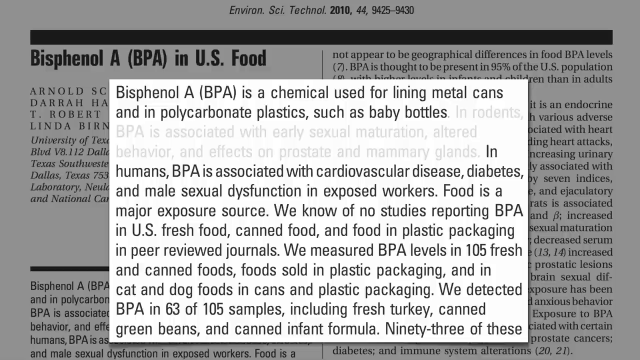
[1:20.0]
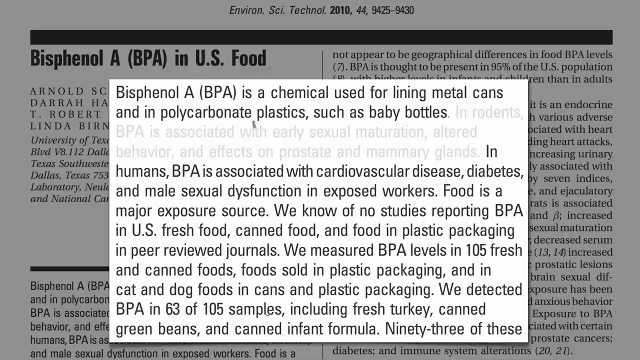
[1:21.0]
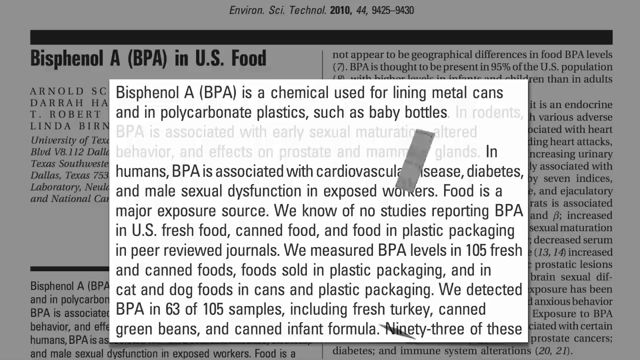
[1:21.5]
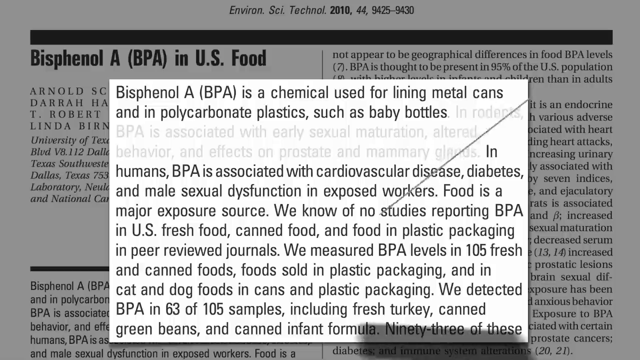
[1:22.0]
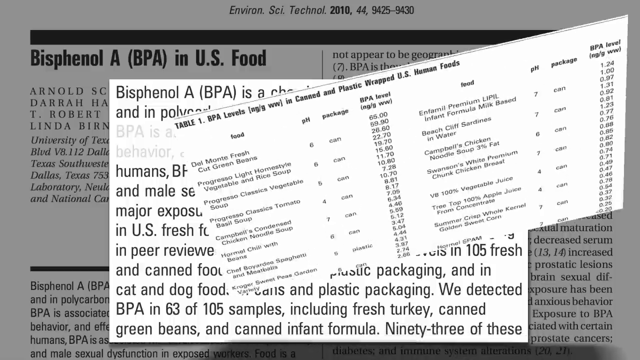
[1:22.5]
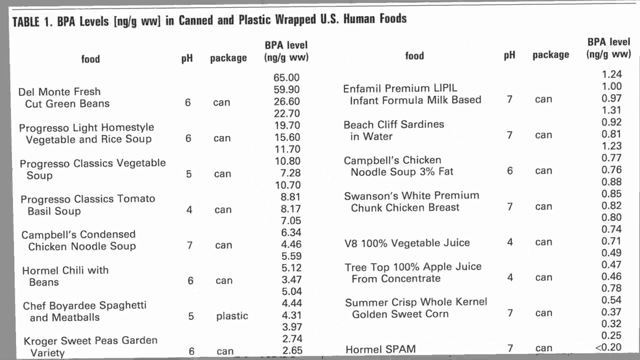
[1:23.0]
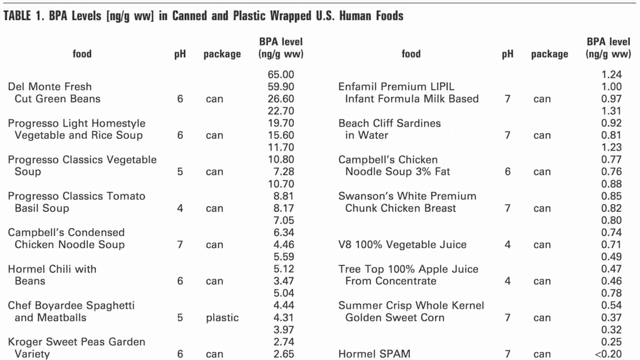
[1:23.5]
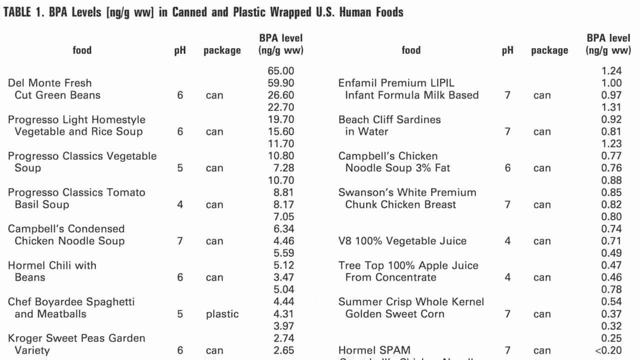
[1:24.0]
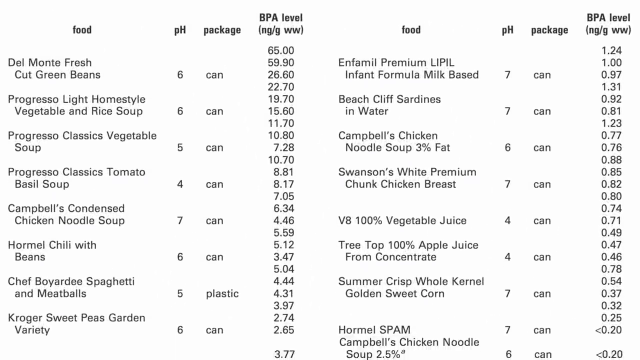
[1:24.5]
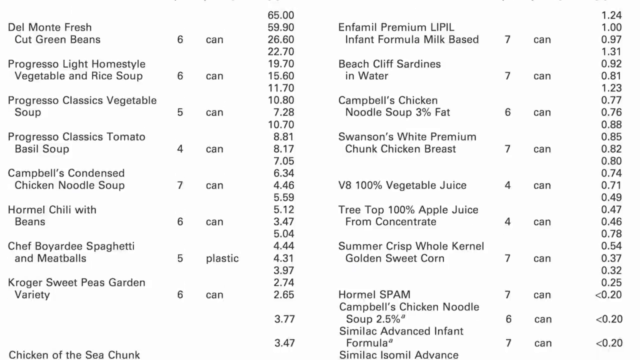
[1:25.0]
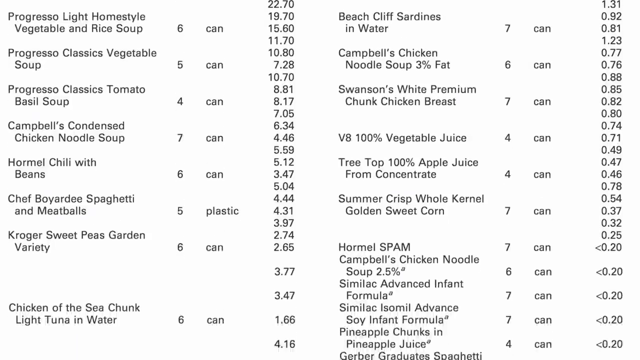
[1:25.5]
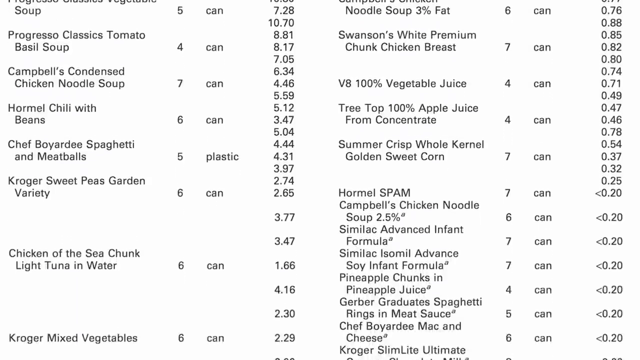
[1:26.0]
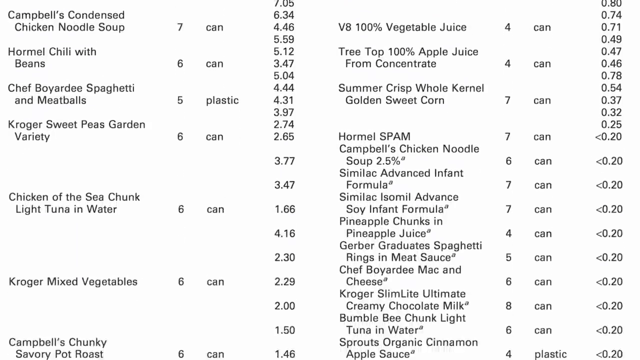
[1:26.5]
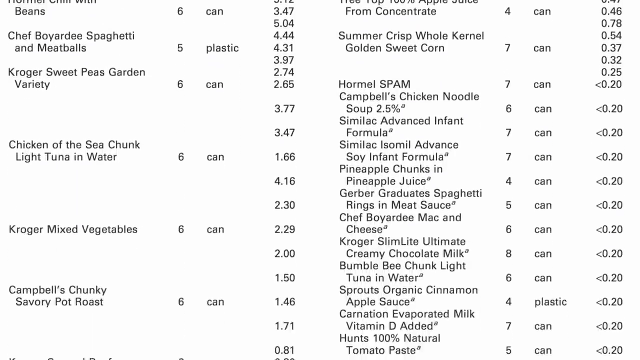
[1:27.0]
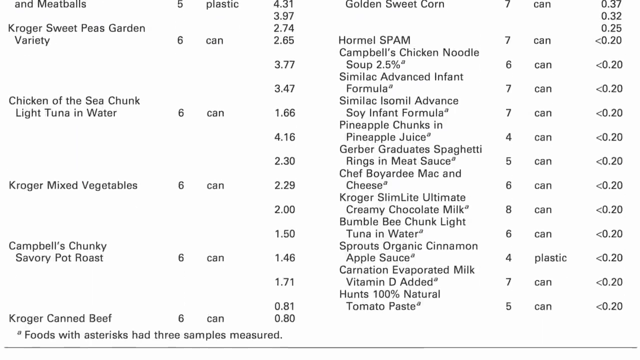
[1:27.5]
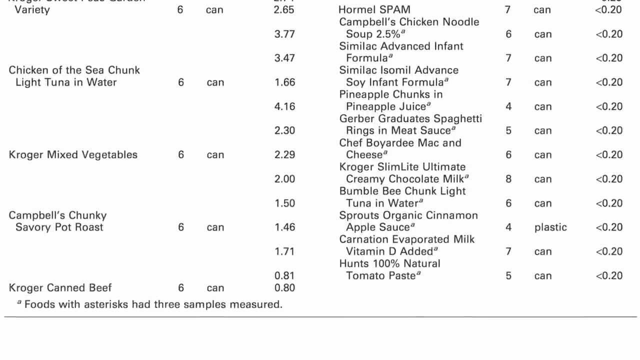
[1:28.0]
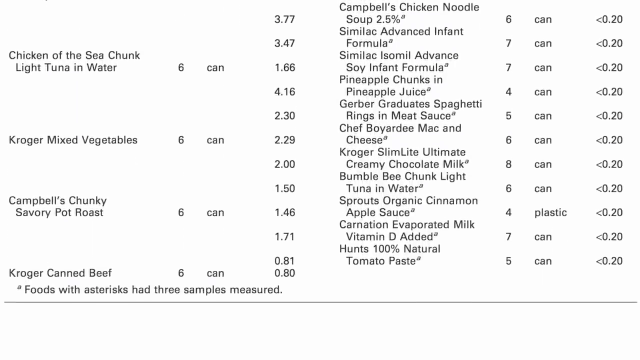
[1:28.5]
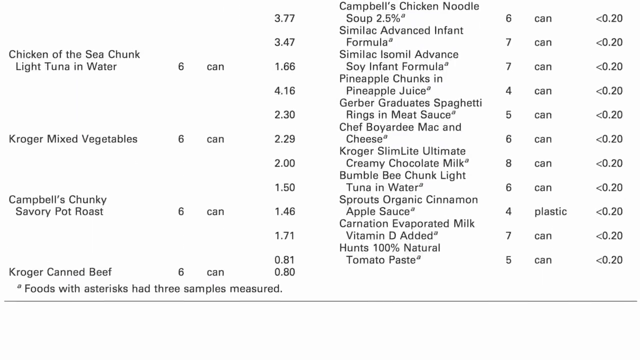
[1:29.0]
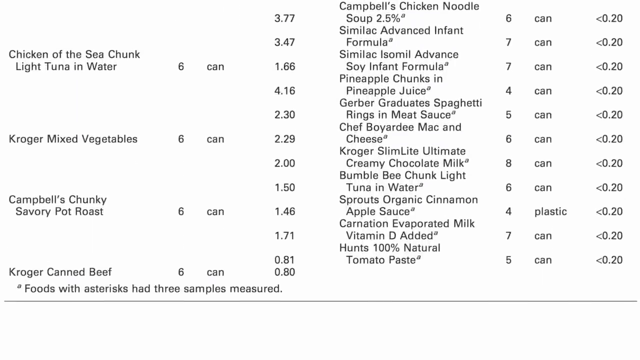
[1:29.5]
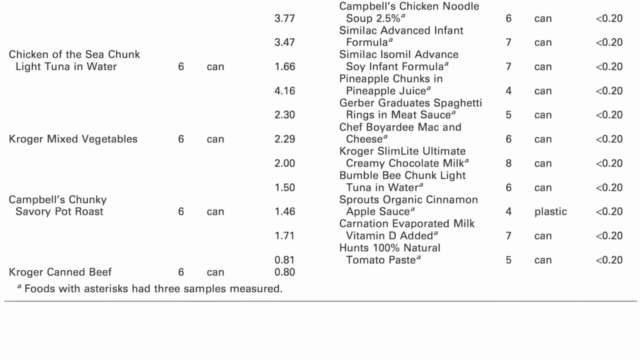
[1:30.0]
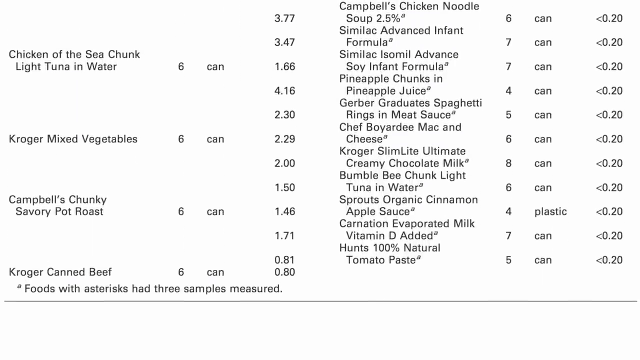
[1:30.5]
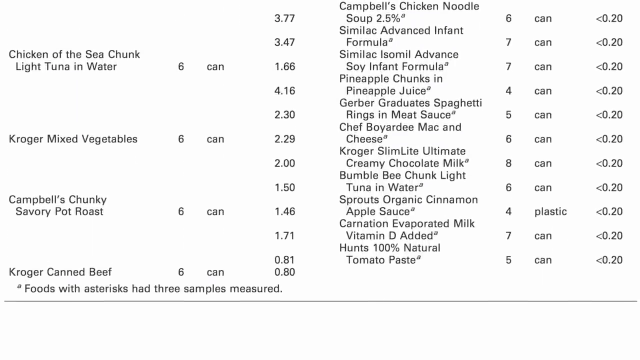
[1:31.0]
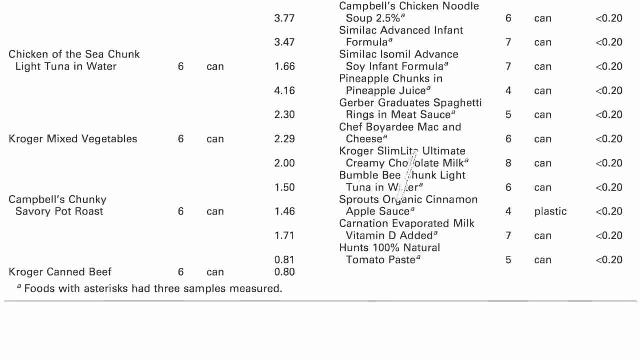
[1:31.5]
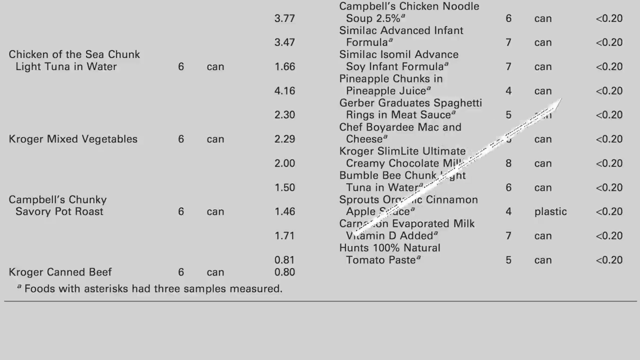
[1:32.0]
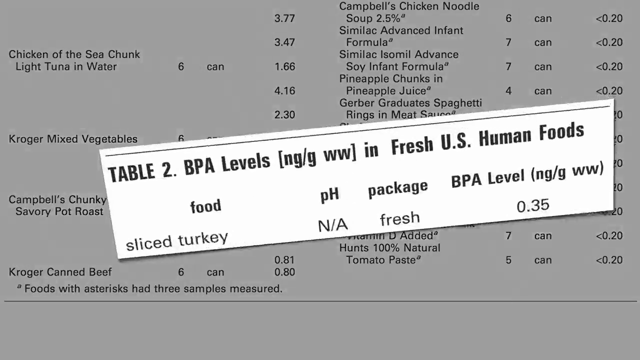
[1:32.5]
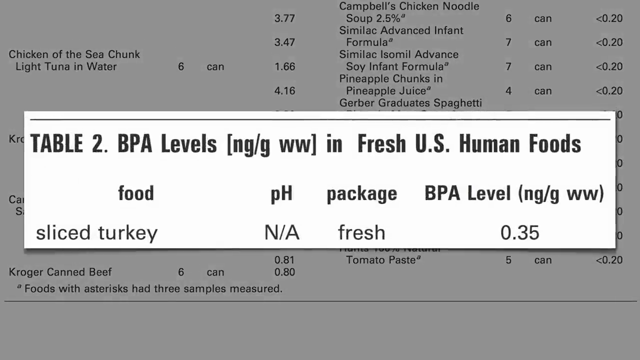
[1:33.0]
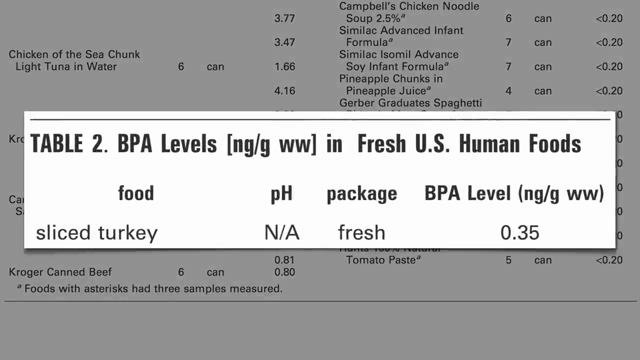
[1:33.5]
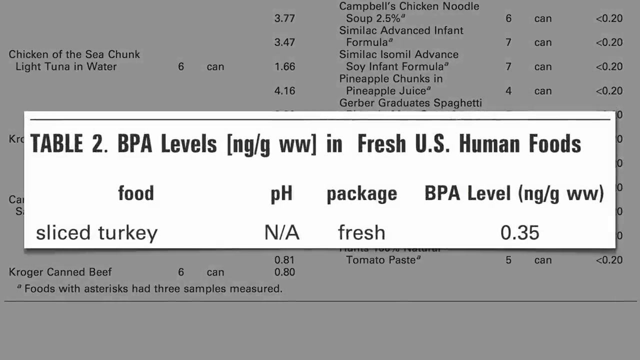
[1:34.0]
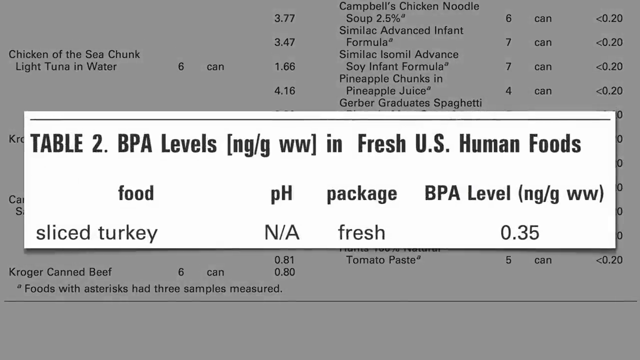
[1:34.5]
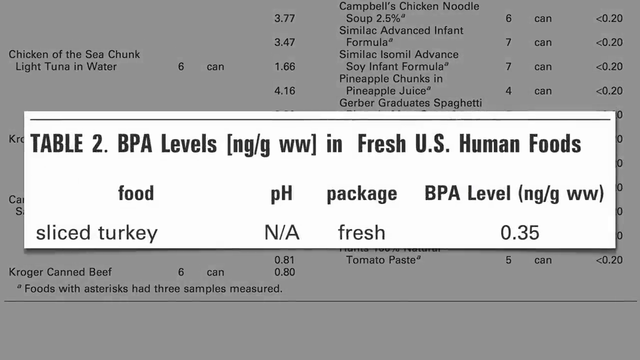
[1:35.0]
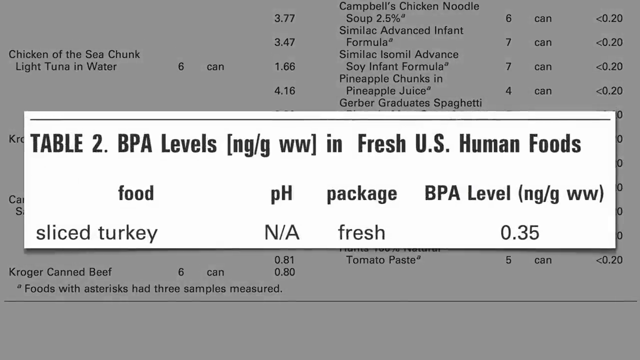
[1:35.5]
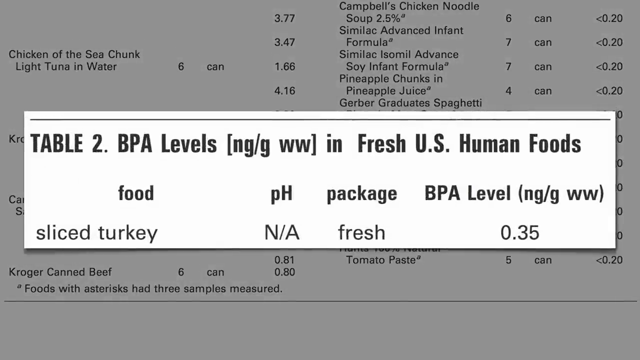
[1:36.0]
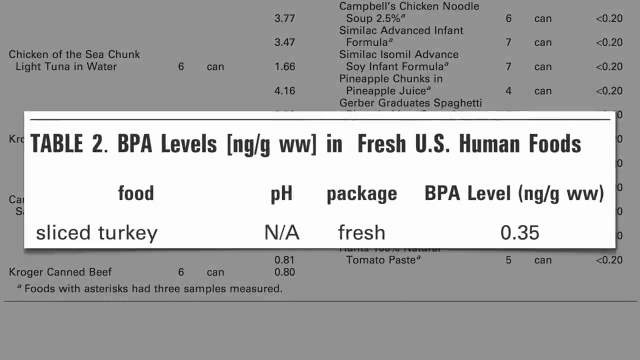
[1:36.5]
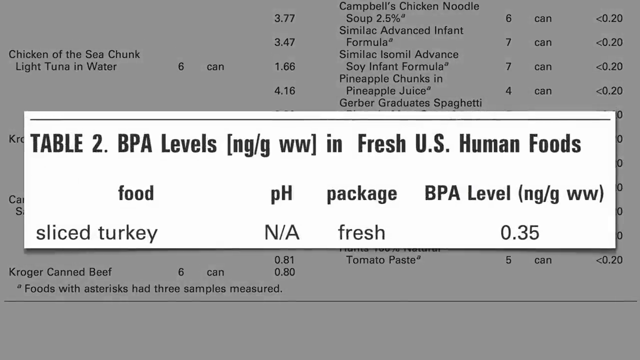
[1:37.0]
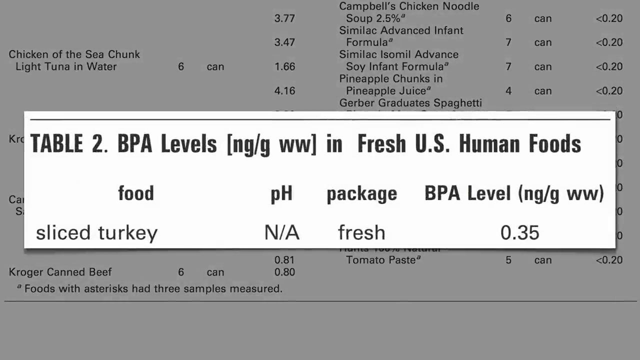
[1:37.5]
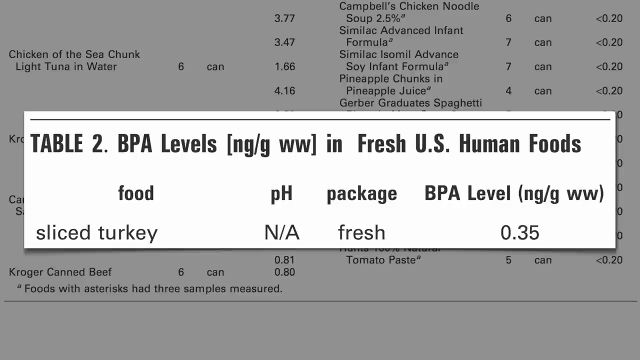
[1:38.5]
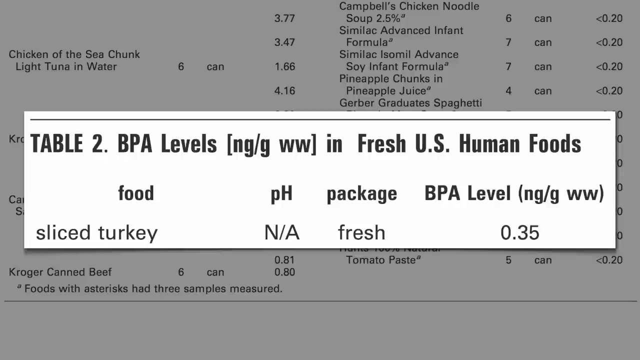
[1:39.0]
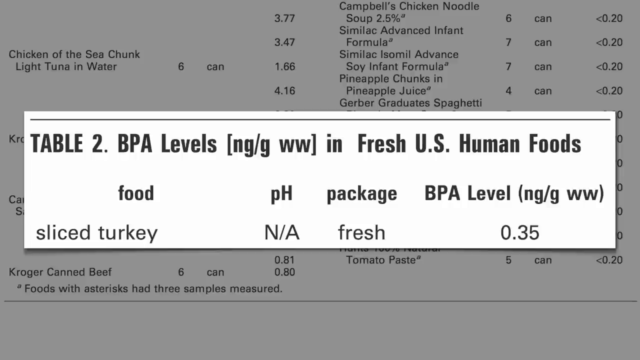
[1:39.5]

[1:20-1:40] What looks like a research study is shown on a white background. At the top it reads "Environsci Technol 2010449425-9430", followed by a thin black bar and the text "Bisphenol A, BPA in U.S. food". The study paragraphs below are covered by a big white box reading "Bisphenol A, BPA, is a chemical used for lining metal cans and in polycarbonate plastics such as baby bottles. In rodents, BPA is associated with early sexual maturation, altered behavior, and effects on prostate and mammary glands. In humans, BPA is associated with cardiovascular disease, diabetes, and male sexual dysfunction in exposed workers. Food is a major exposure source. We know of no studies reporting BPA in U.S. fresh food, canned food, and food in plastic packaging in peer-reviewed journals. We measured BPA levels in 105 fresh and canned foods, foods sold in plastic packaging, and in cat and dog foods in cans and plastic packaging. We detected BPA in 63 of 105 samples including fresh turkey, canned green beans, and infant formula." The view then moves to a page listing many names of food brands, for example "Progresso Light Home Style Vegetable and Rice Soup" with a six and another number next to it, then "can" or "plastic", followed by more numbers. The view scrolls down the long list to the bottom, where it reads "foods with asterisks had three samples measured". Another rectangular box then pops up reading "table two, BPA levels, NG/G, WW, in fresh U.S. human foods", with "food" above "sliced turkey", "PH" above "not applicable, N.A.", "package" above "fresh", and "BPA level, NG/G, WW" above "0.35". It stays on this for quite a while.